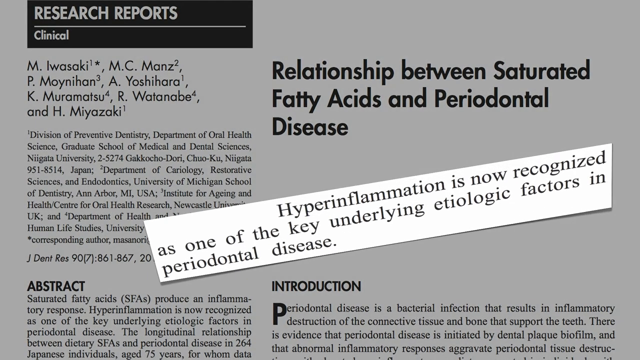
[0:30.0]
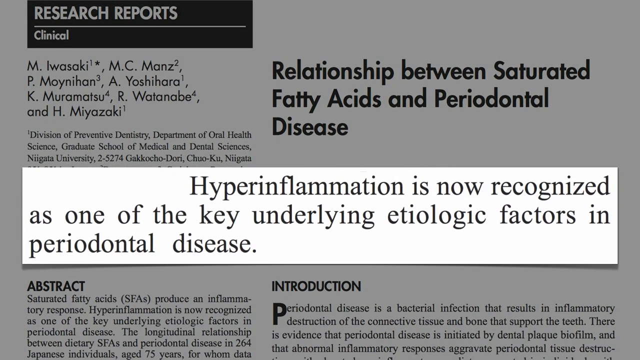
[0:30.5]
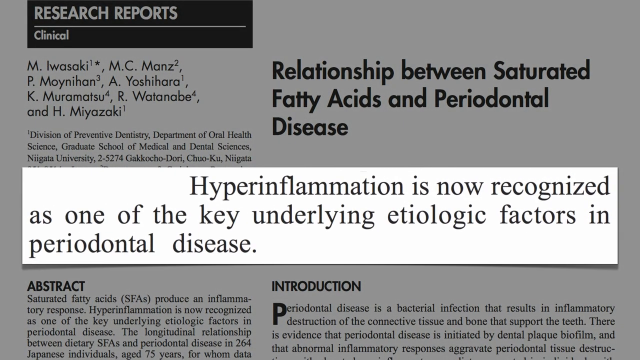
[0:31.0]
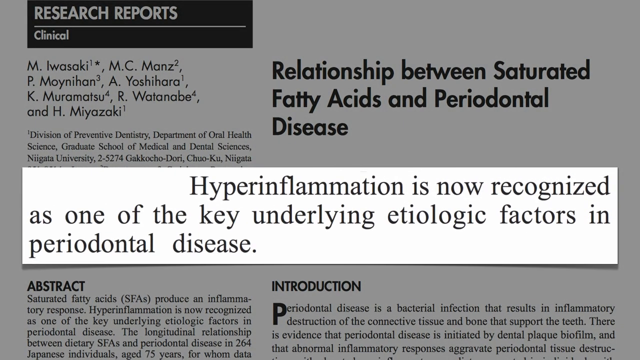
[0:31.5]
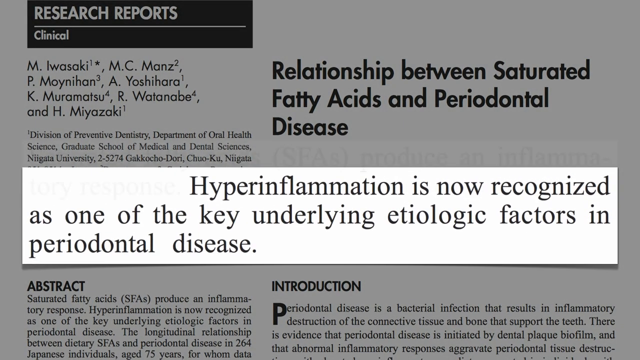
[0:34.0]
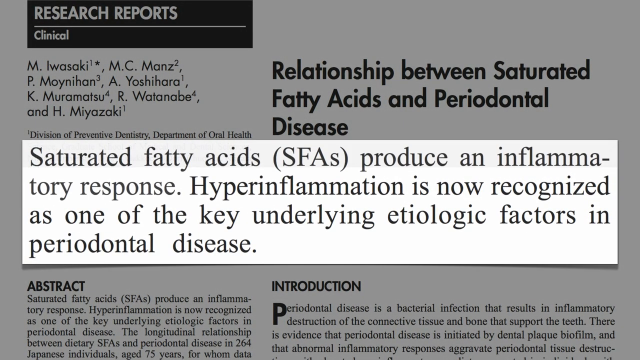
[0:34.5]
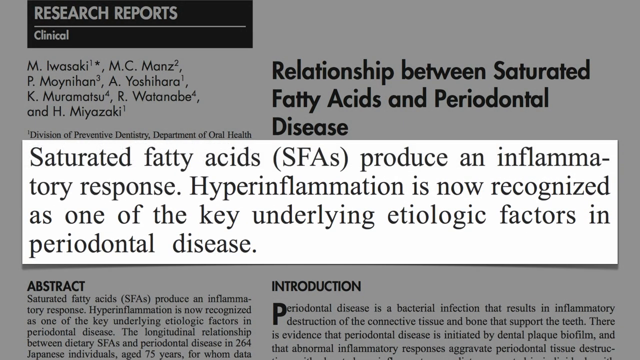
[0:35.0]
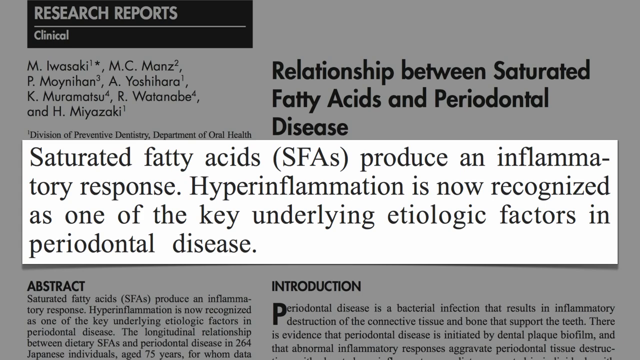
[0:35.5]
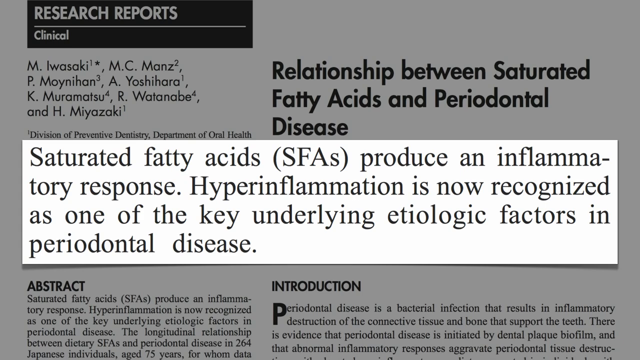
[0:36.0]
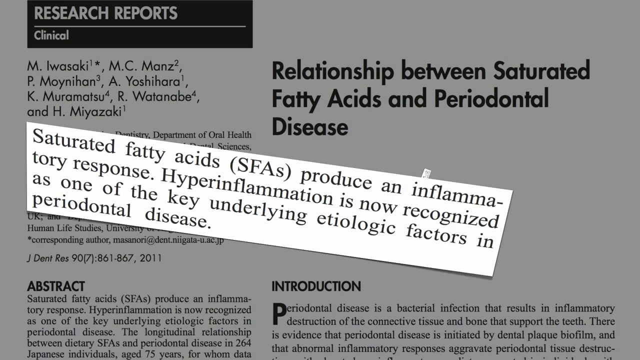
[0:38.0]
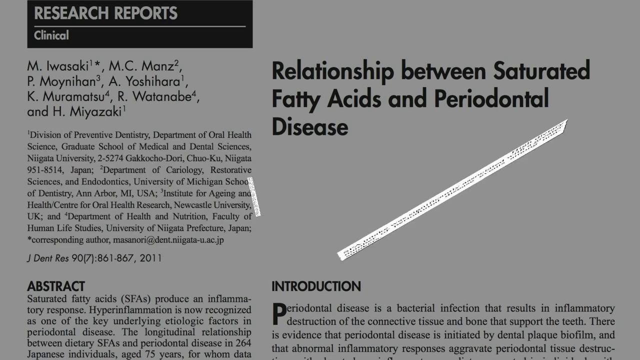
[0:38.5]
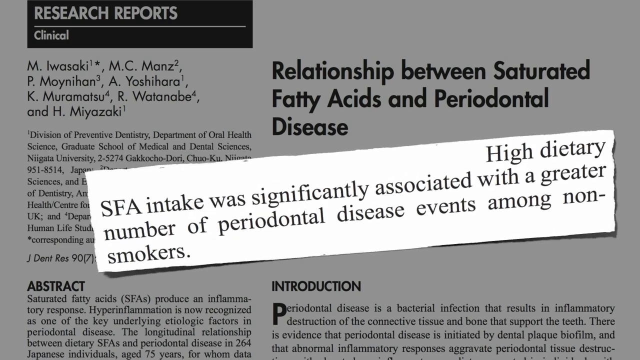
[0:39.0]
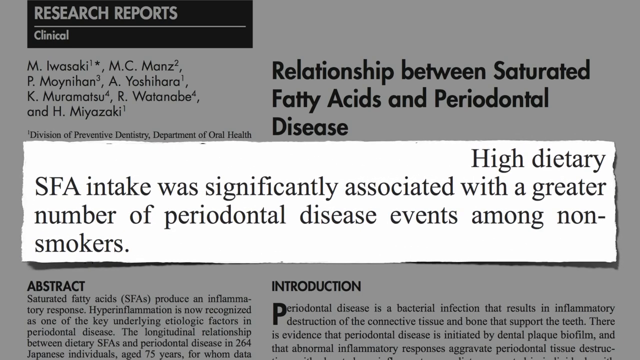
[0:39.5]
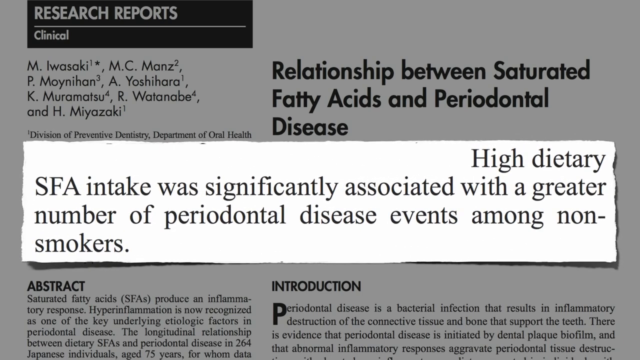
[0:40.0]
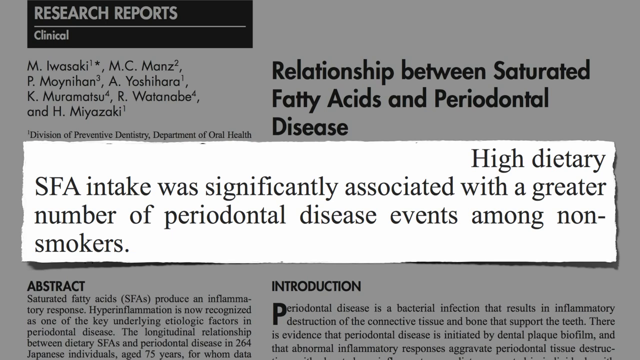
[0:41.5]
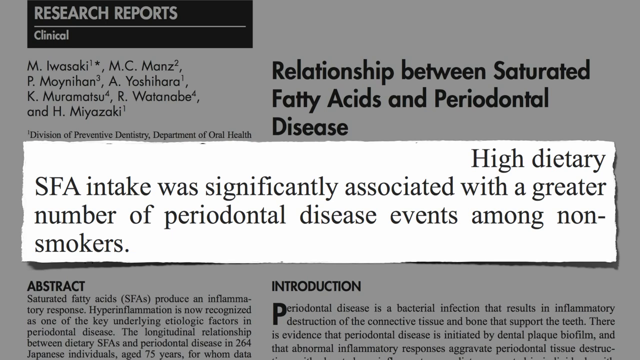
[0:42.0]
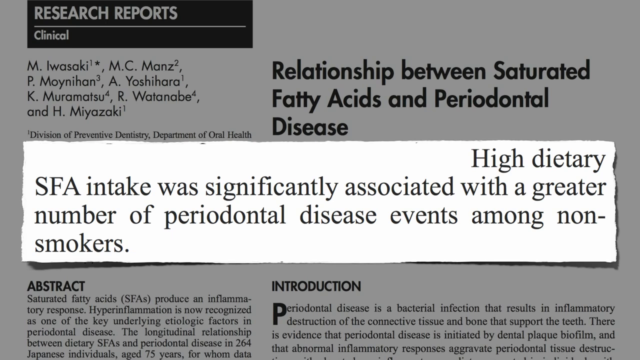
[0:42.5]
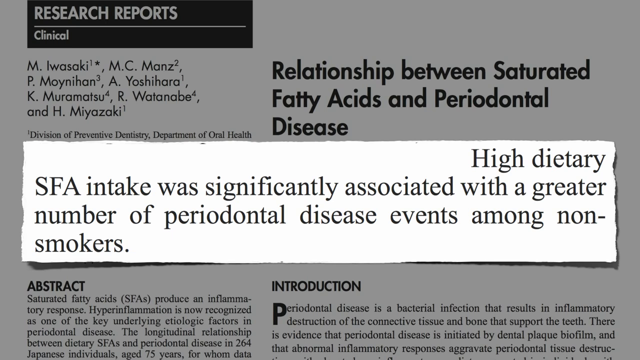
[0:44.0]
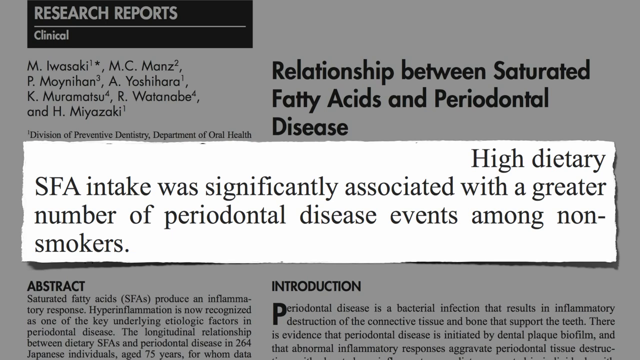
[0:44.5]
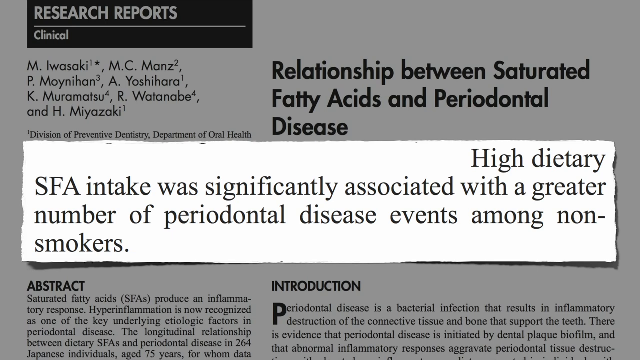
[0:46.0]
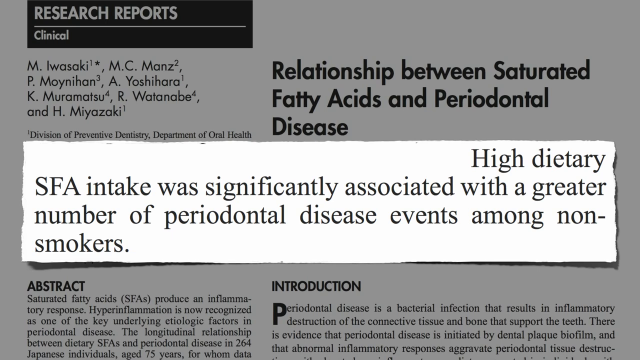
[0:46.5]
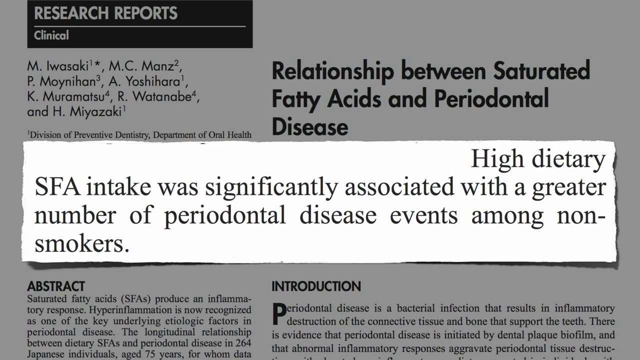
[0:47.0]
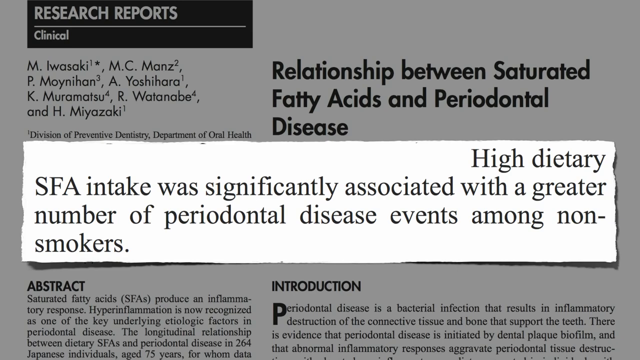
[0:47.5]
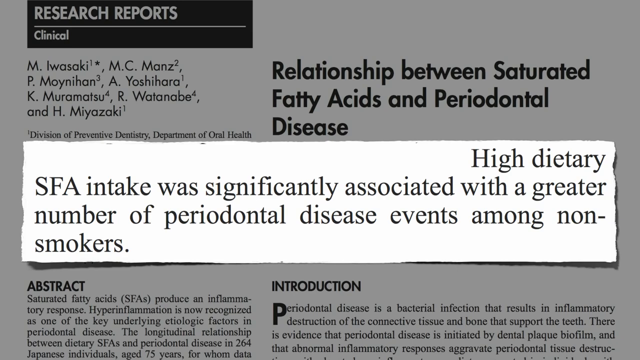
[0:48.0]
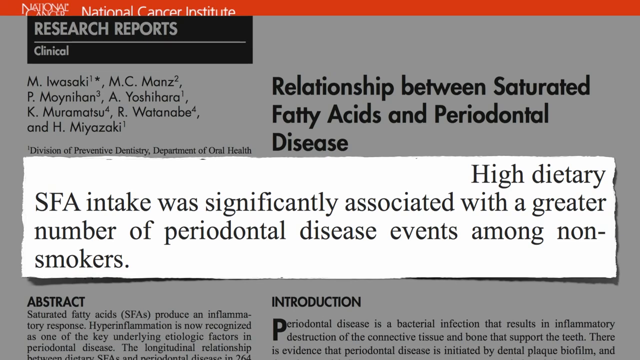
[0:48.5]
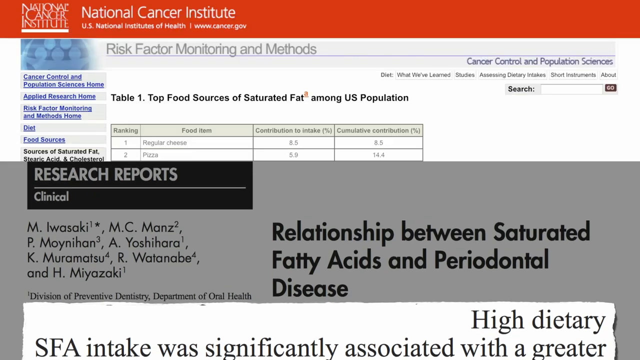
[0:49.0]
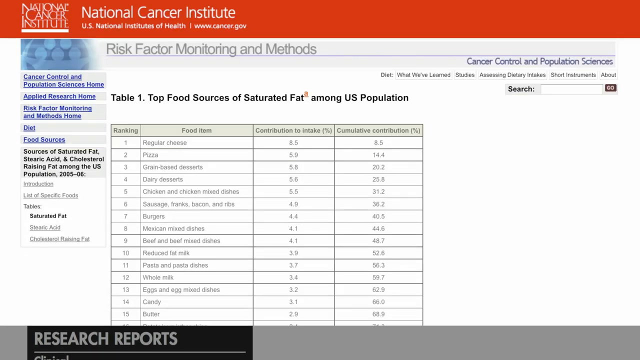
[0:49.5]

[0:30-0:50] A white label appears over the article "relationship between saturated fatty acids and periodontal disease." It reads "hyperinflammation is now recognized as one of the key underlying etiologic factors in periodontal disease," in black lettering on a white background. It also mentions saturated fatty acids (SFA) producing an inflammatory response. Another label pops up reading "high dietary SFA intake was significantly associated with a greater number of periodontal disease events among non-smokers." The video then moves to a graph, which is kind of small. Behind the white label is the article's introduction on the main page, describing periodontal disease as a bacterial infection; it looks like a newspaper article, but in a kind of faded white color, with black lettering.